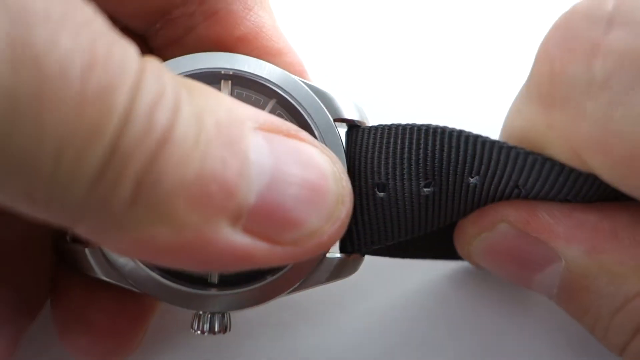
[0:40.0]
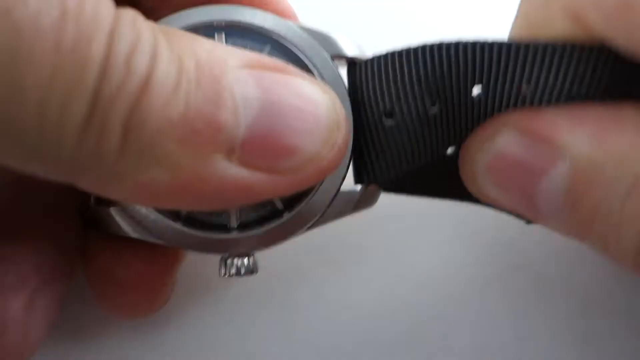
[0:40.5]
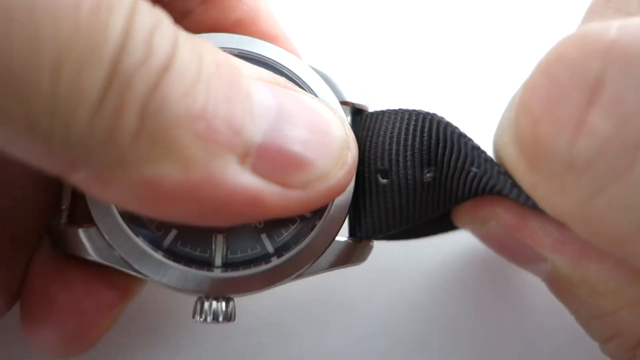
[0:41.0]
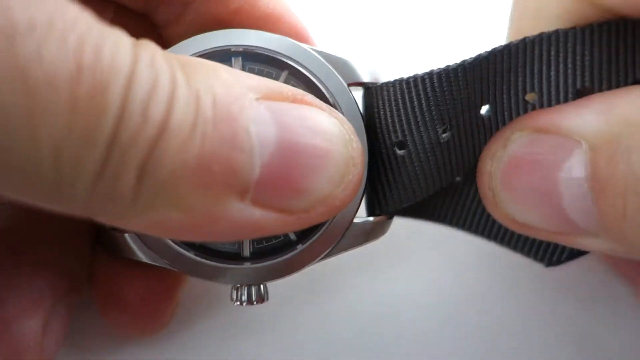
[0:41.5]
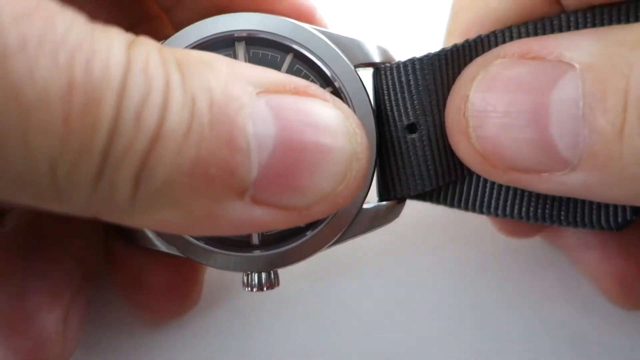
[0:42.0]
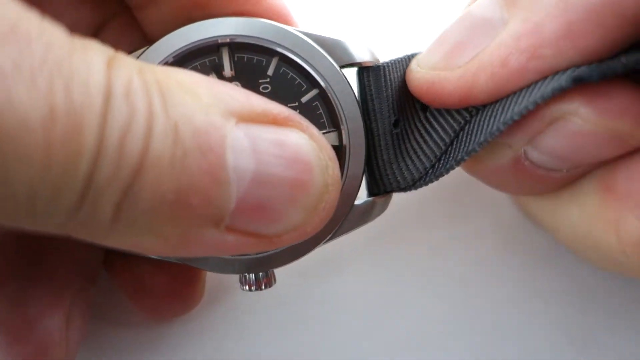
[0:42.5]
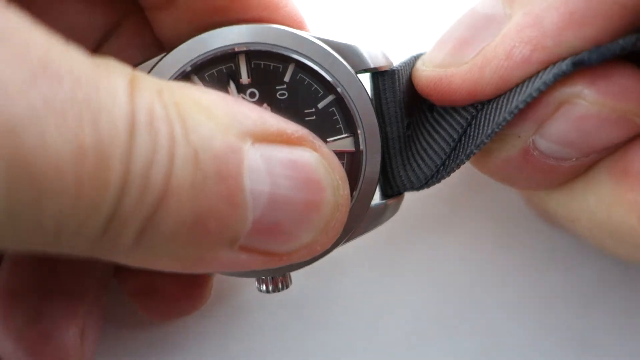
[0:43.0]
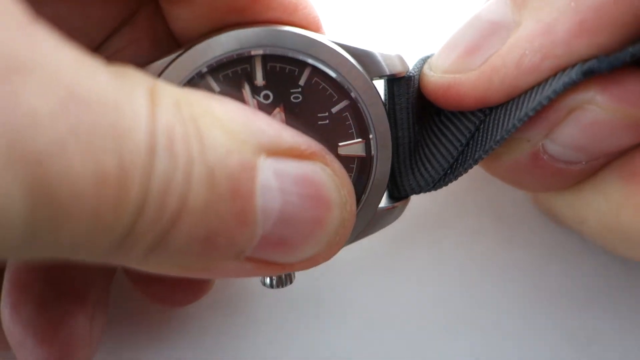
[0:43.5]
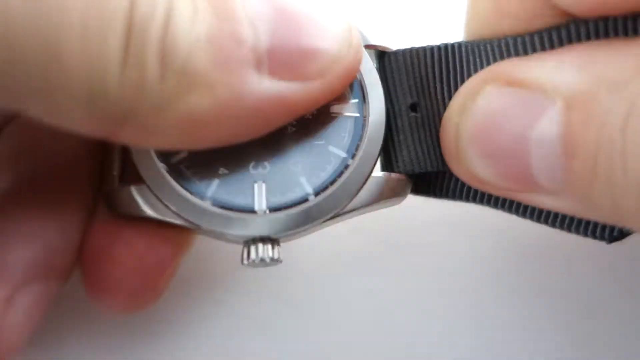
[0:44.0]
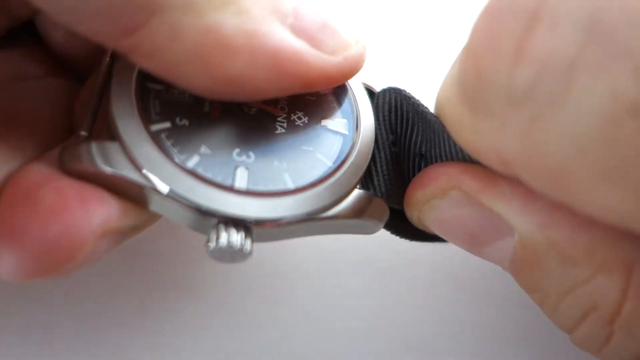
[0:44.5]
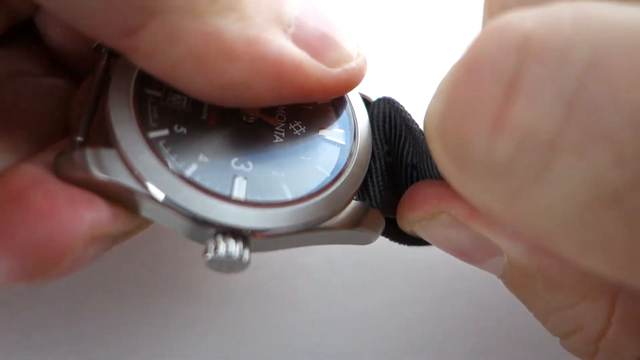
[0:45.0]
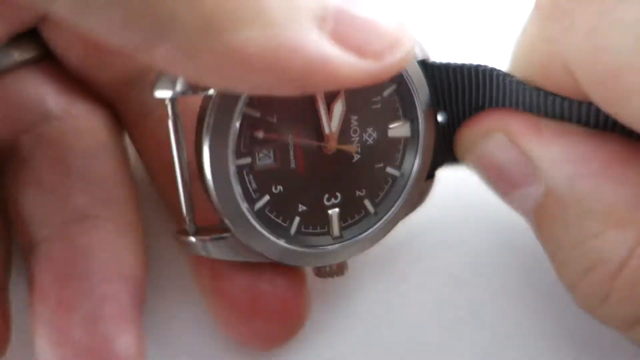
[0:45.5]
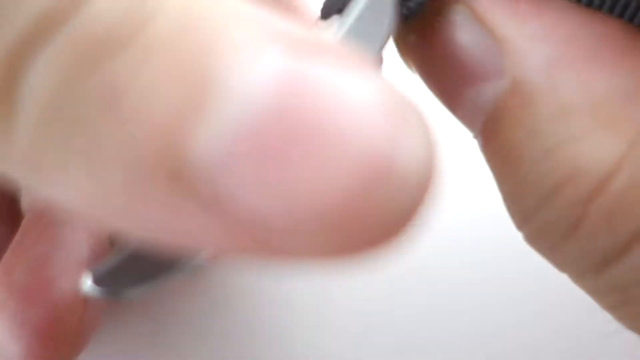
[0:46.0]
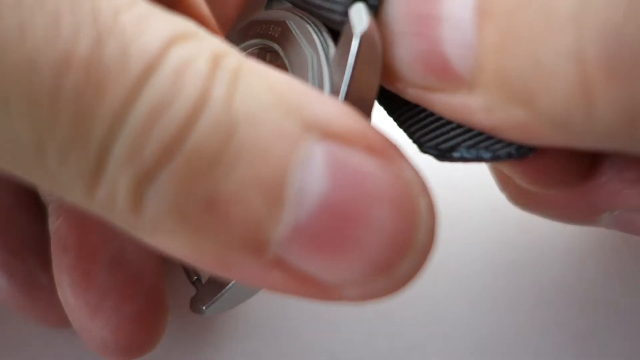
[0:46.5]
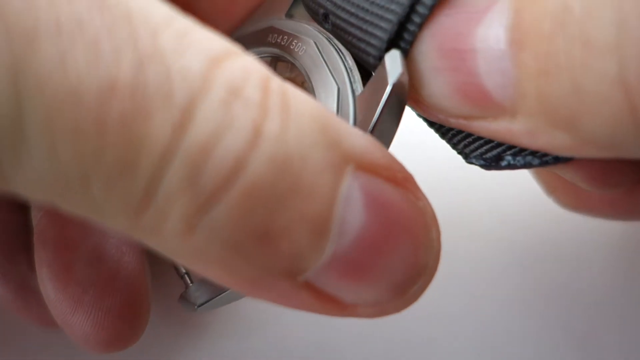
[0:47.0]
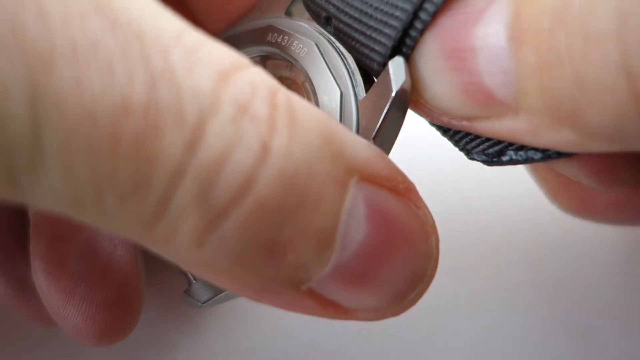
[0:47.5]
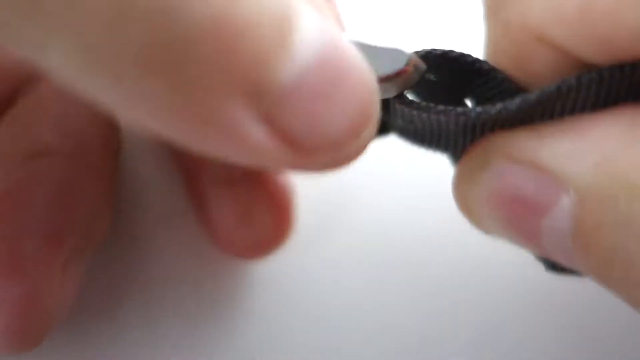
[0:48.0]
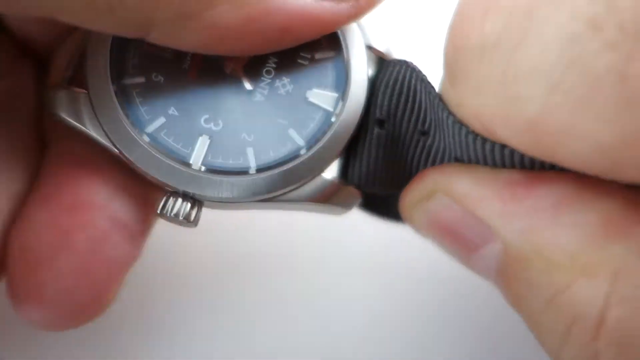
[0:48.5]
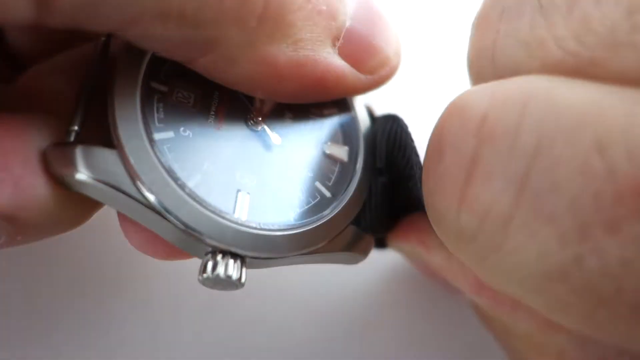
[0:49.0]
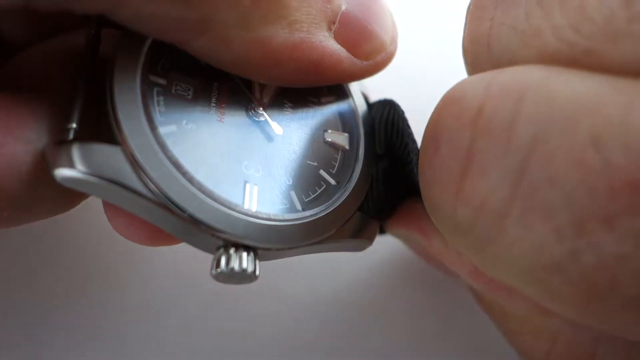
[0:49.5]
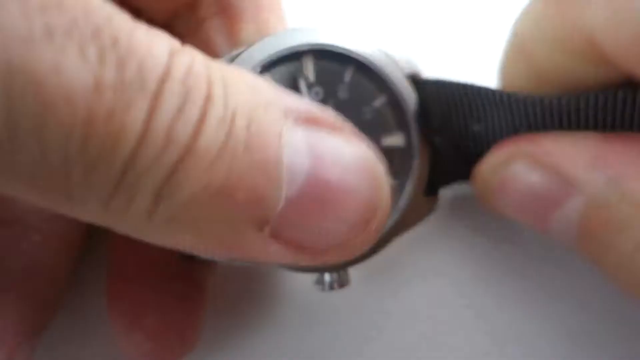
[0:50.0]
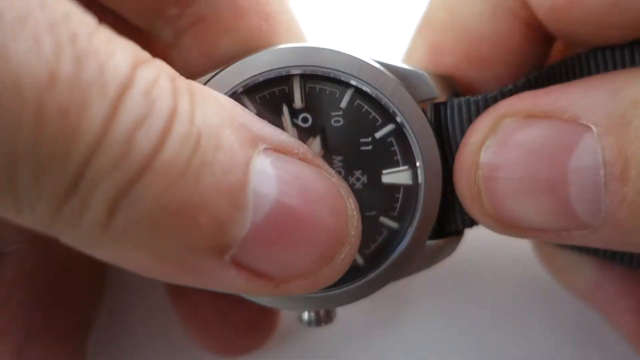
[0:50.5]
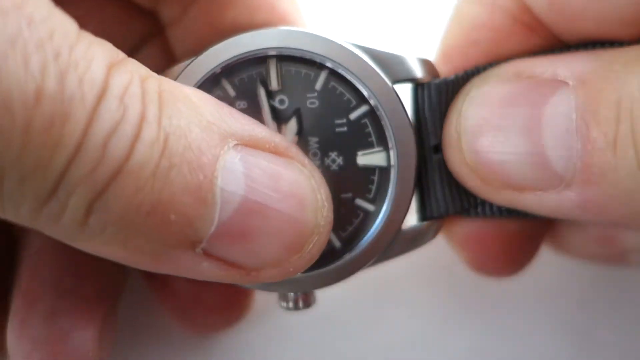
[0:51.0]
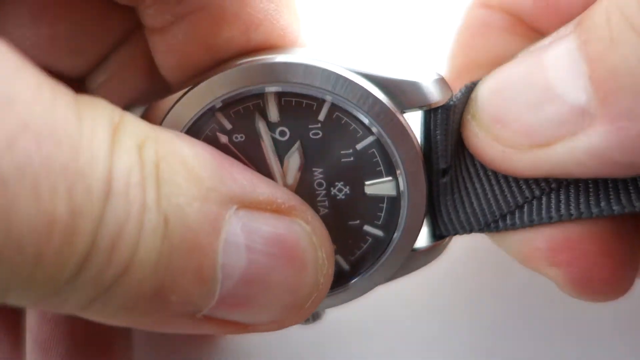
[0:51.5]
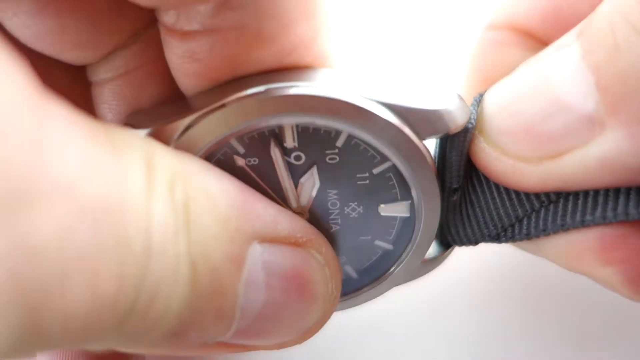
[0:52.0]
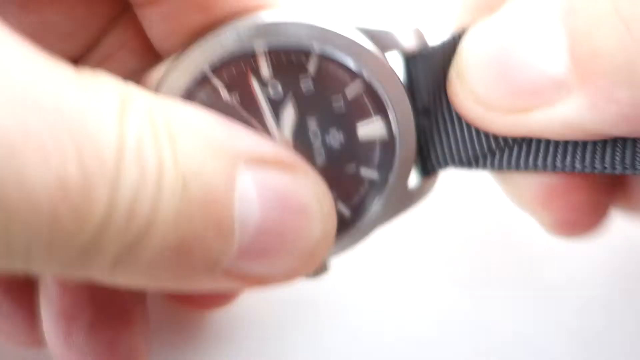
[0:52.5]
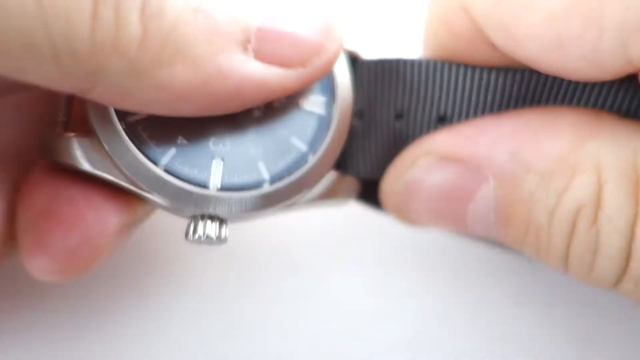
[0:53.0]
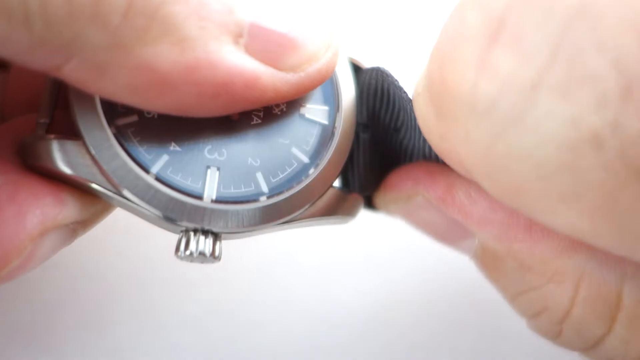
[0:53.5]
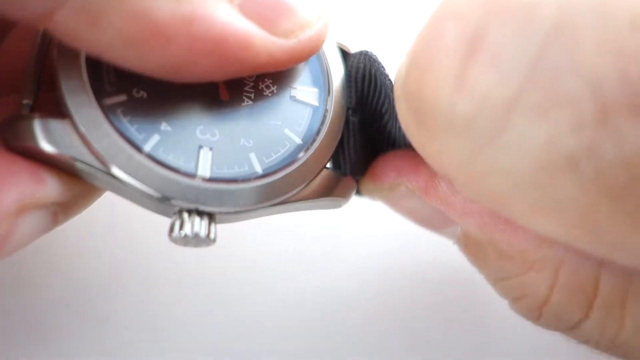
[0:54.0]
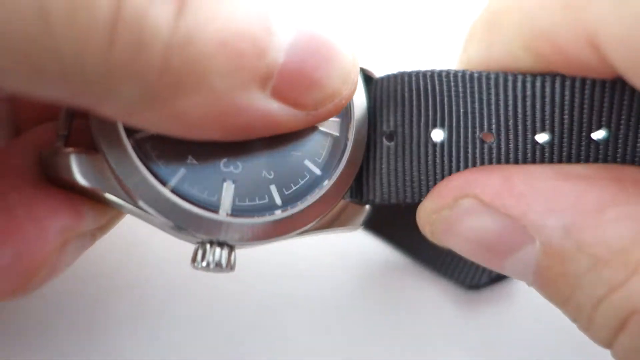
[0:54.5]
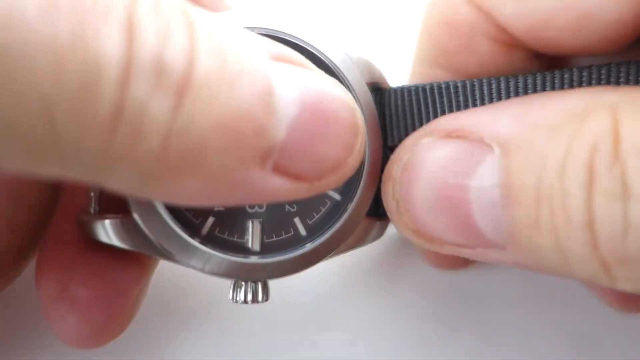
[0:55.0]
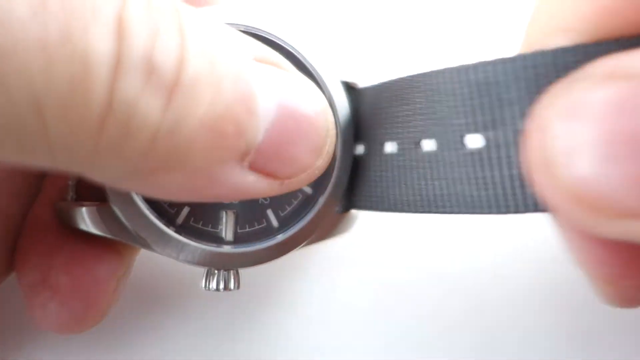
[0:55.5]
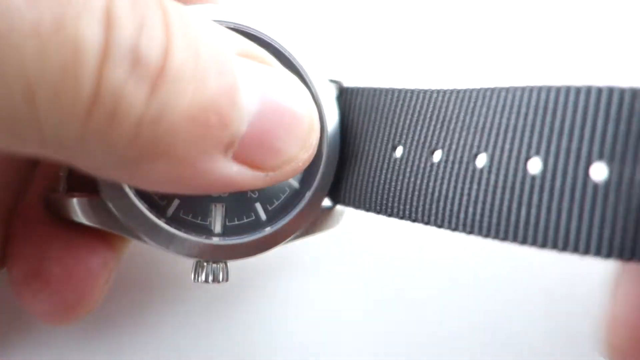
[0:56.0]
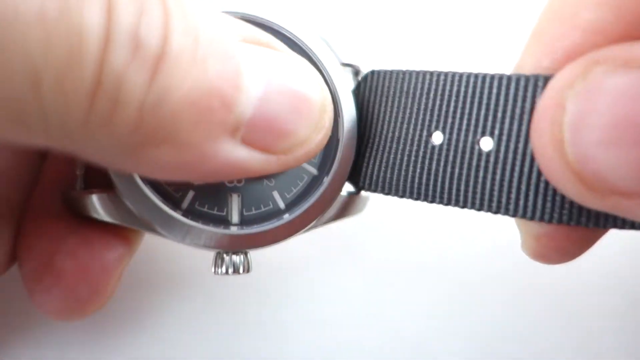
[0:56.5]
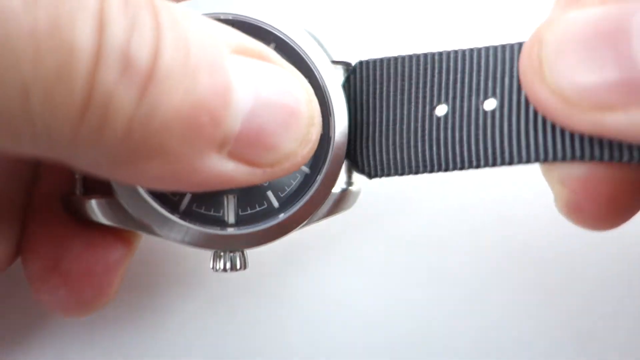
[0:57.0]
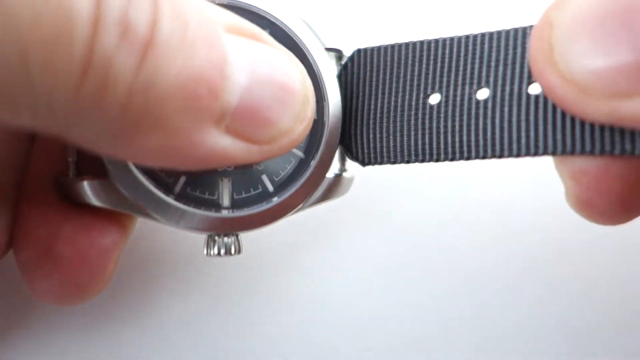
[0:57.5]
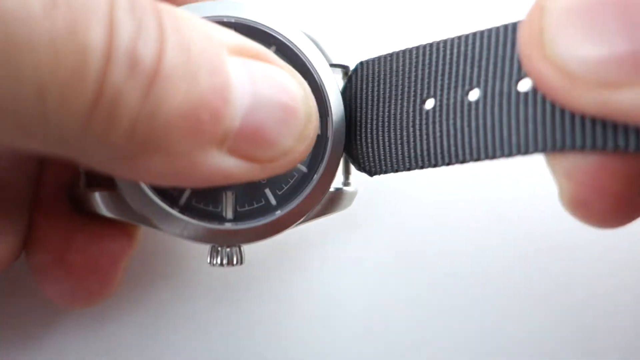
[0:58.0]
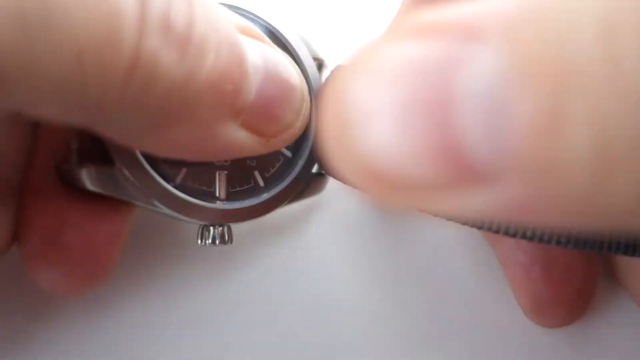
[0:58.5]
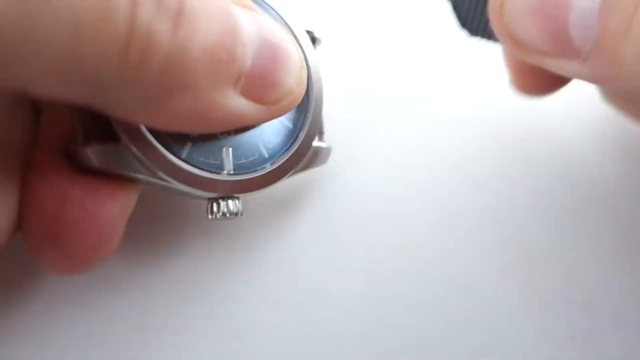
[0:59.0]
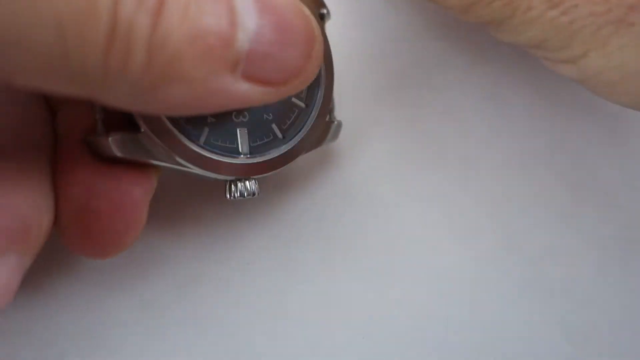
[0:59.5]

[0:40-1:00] A thumb is completely over the watch face, so the number 10 is no longer visible. On the right-hand side, the linked strap comes back and touches the upper part of the watch strap on the right. Four holes are visible in the watch strap. A curved finger in the top right-hand corner of the screen holds the back of the strap, with the thumb on the front of the strap. They seem to twist the strap toward the bottom of the screen, then upward to the top. As they do this, numbers 10 and 11 appear on the clock face, and the numbers 3, 4 and 5 appear when they turn their fingers upward toward the top left-hand corner of the screen, moving their thumb up to the top section of the watch face. The numbers are written in silver.